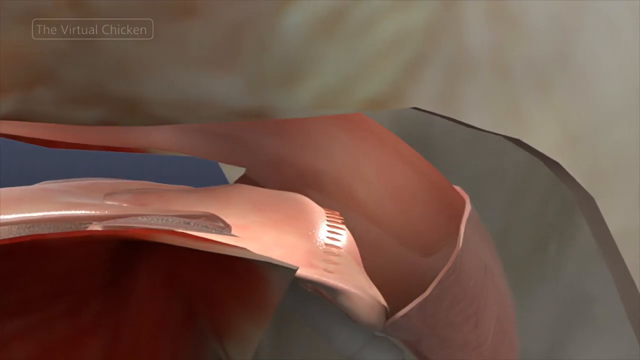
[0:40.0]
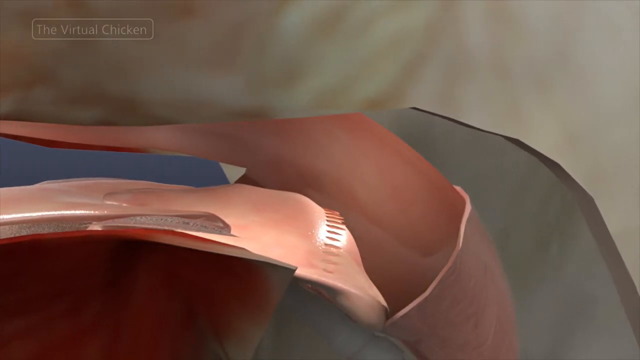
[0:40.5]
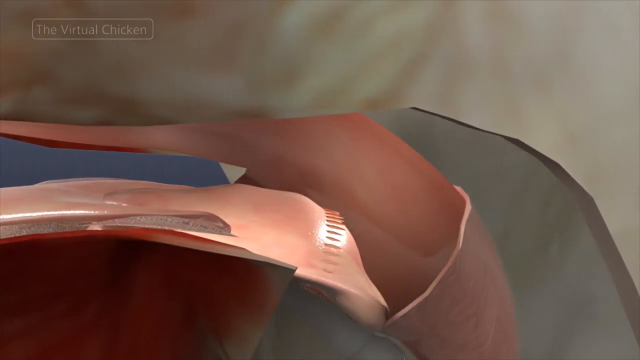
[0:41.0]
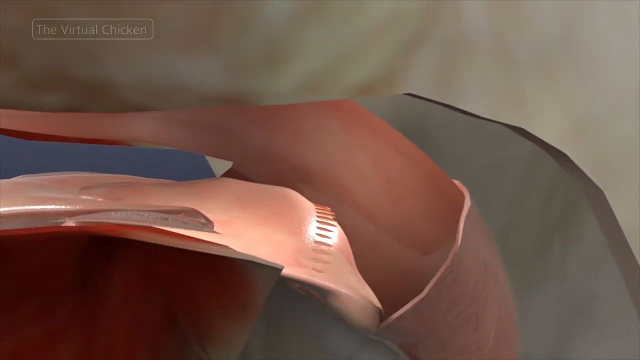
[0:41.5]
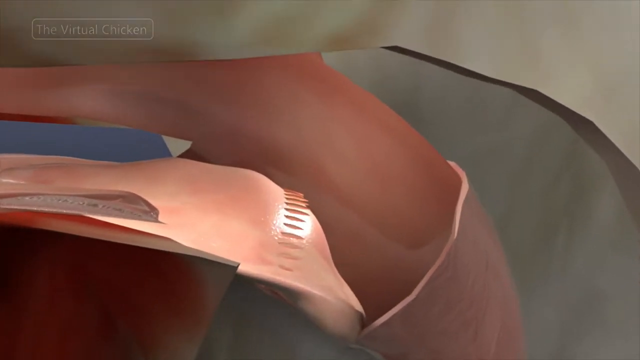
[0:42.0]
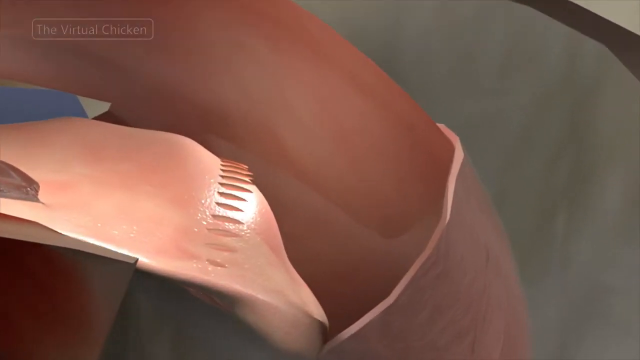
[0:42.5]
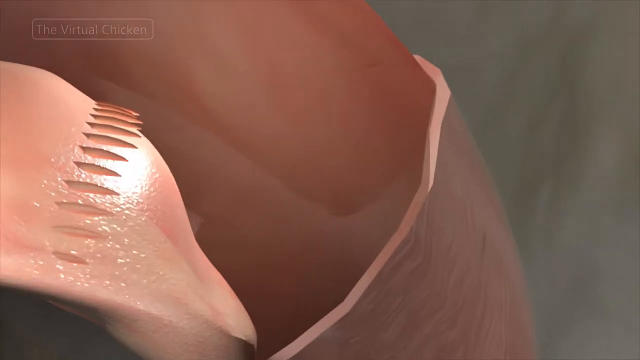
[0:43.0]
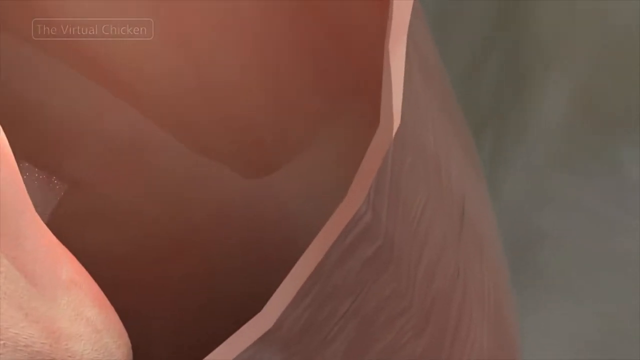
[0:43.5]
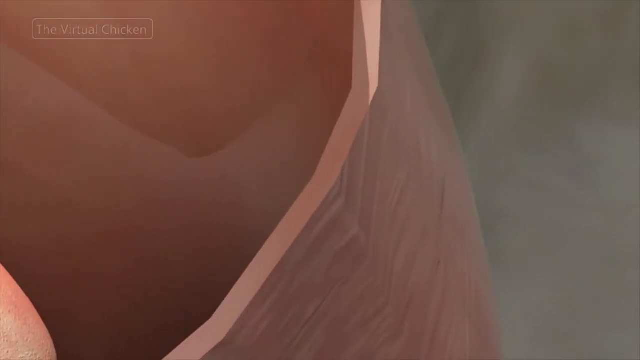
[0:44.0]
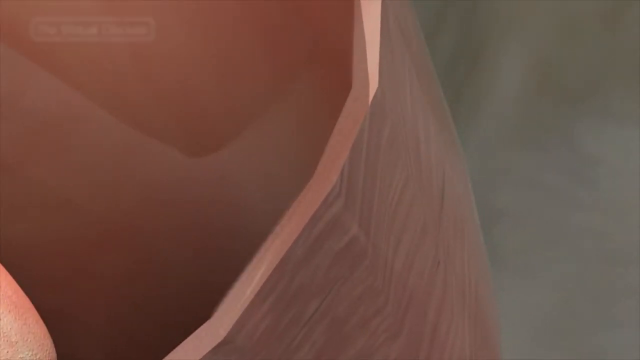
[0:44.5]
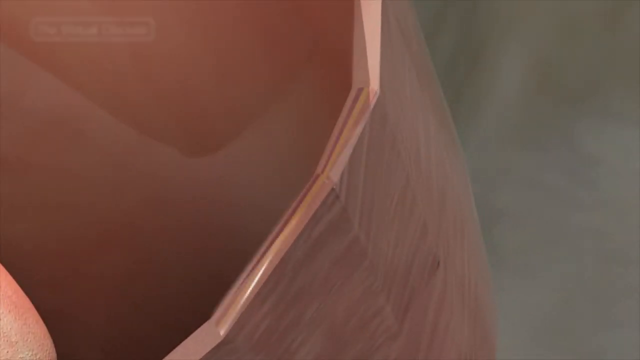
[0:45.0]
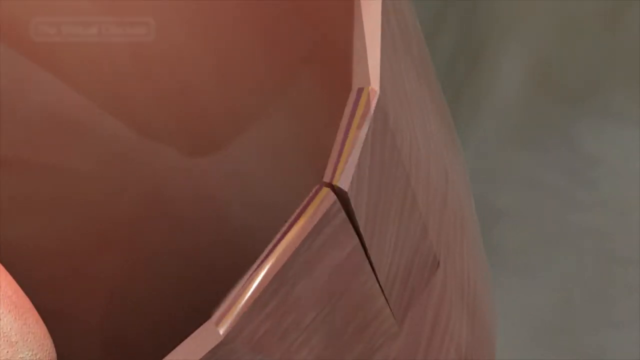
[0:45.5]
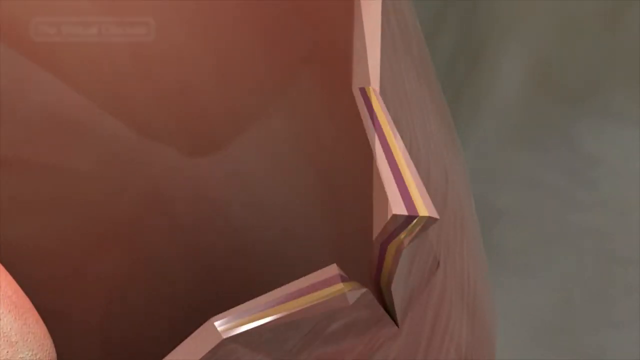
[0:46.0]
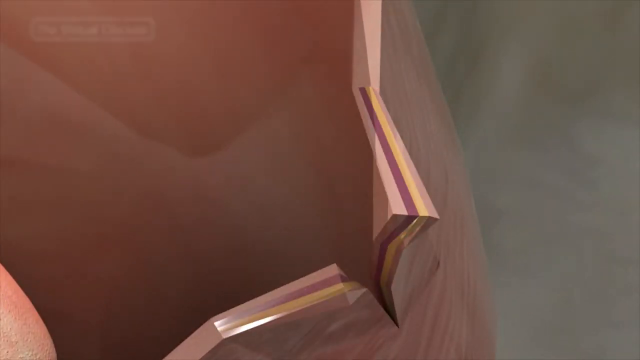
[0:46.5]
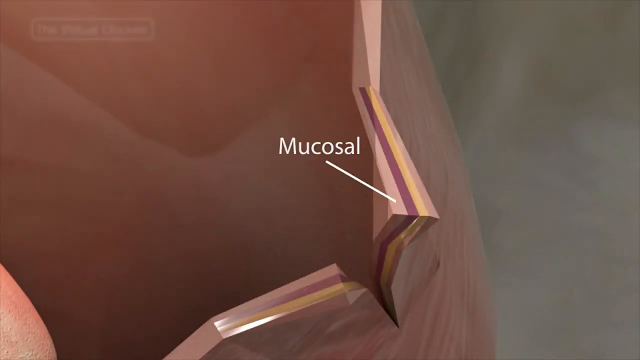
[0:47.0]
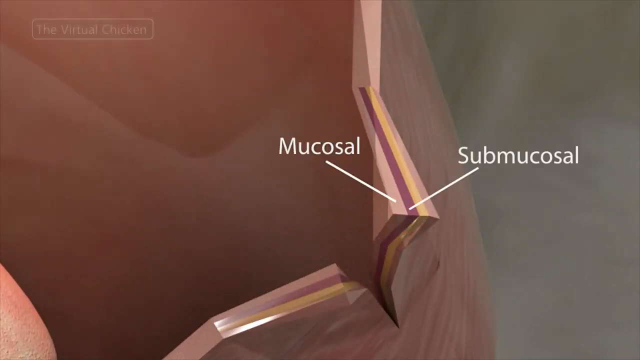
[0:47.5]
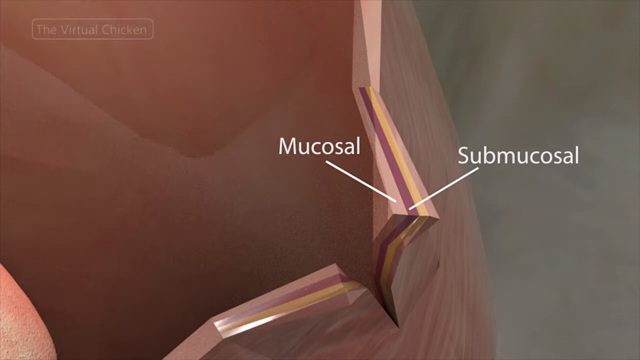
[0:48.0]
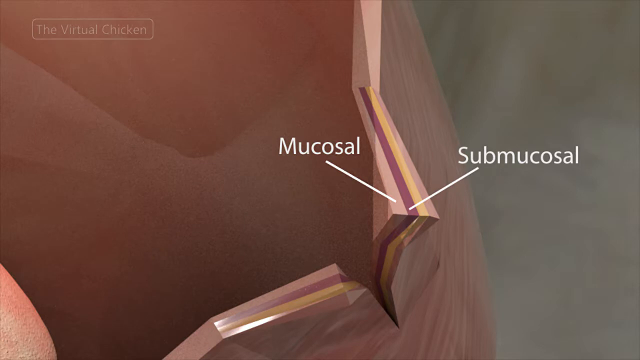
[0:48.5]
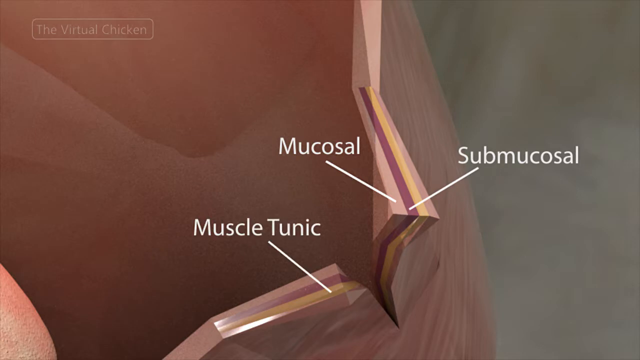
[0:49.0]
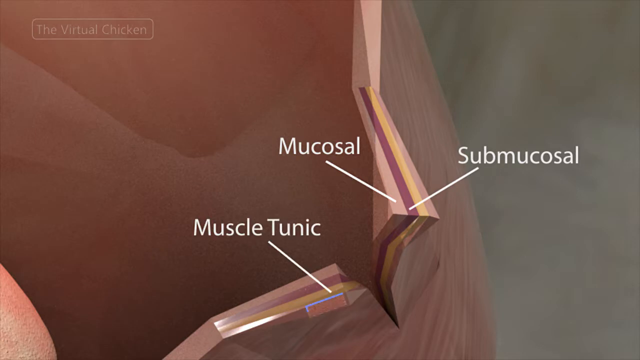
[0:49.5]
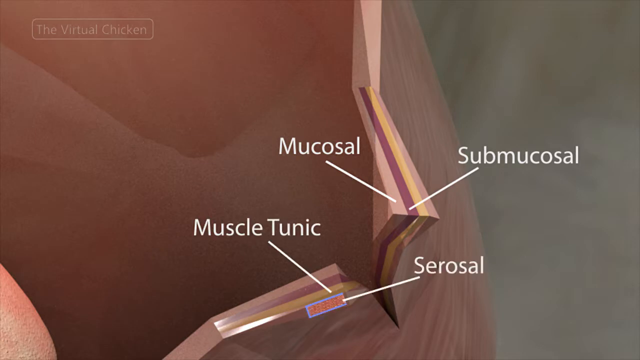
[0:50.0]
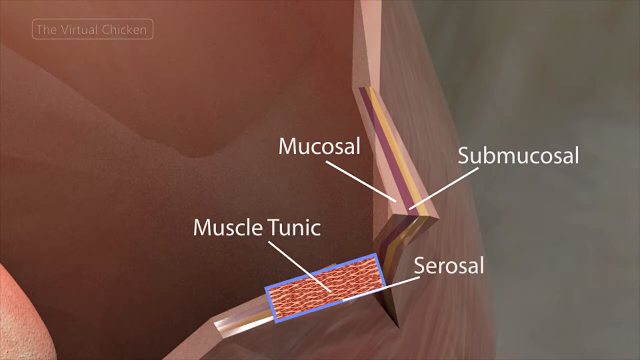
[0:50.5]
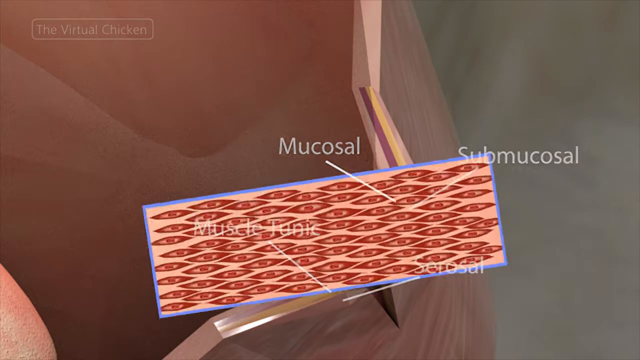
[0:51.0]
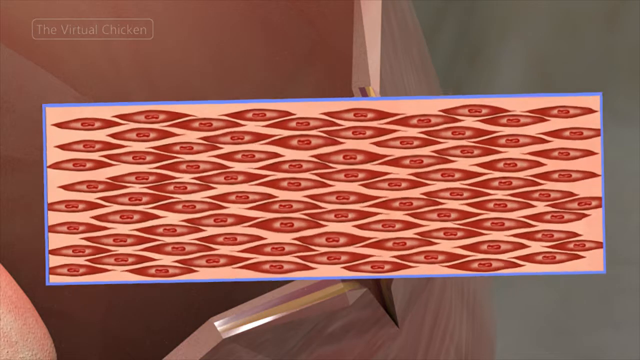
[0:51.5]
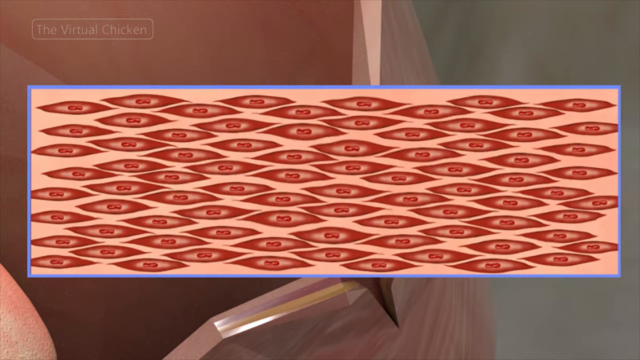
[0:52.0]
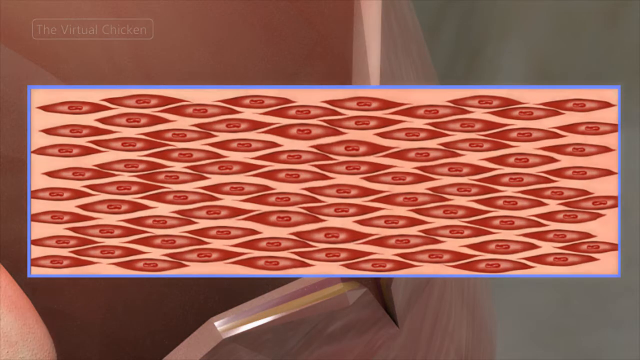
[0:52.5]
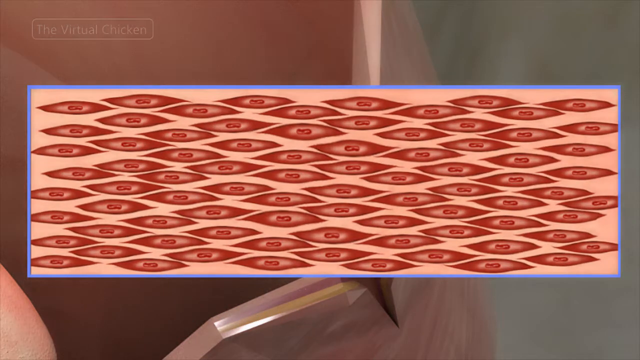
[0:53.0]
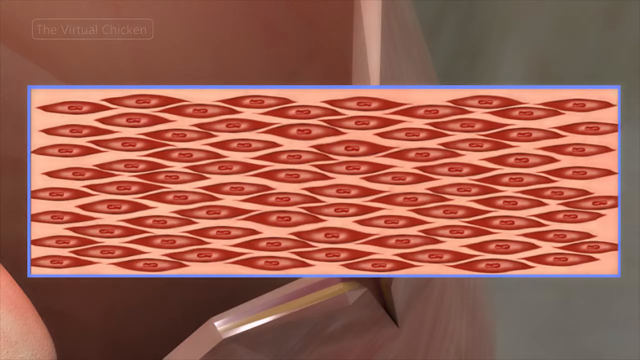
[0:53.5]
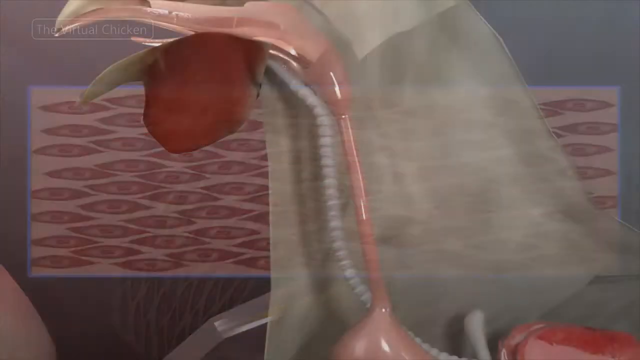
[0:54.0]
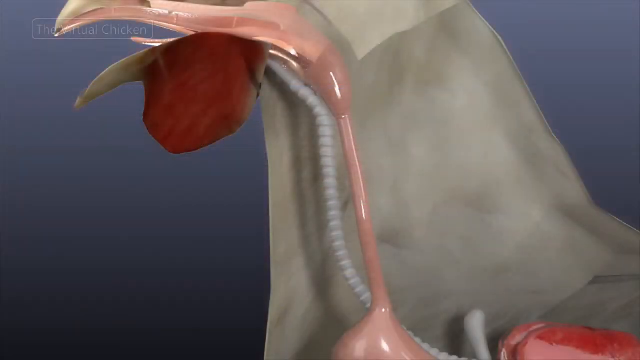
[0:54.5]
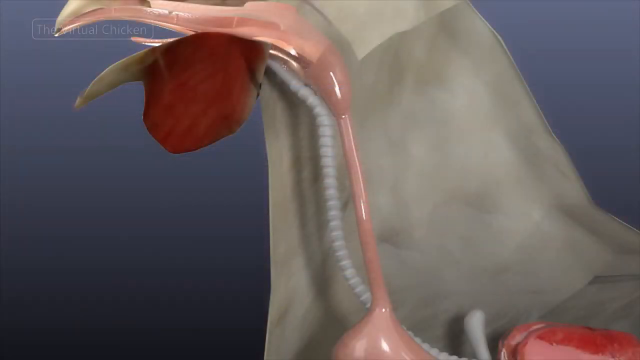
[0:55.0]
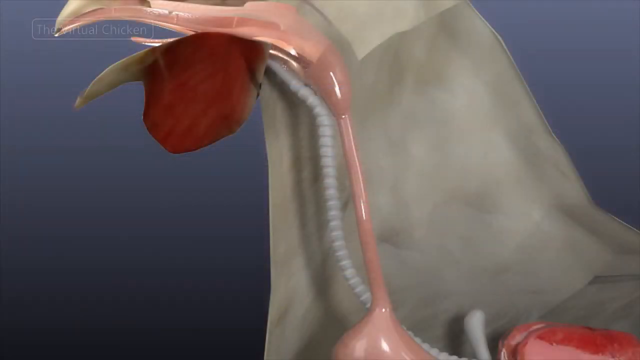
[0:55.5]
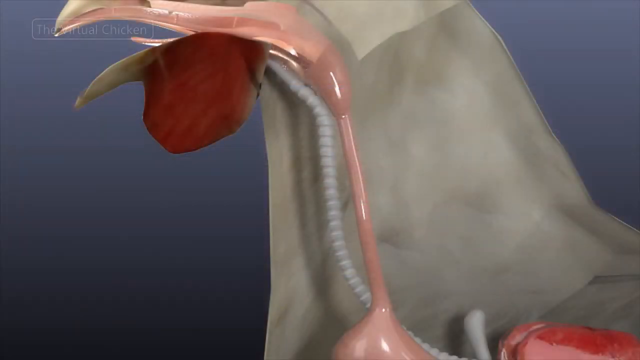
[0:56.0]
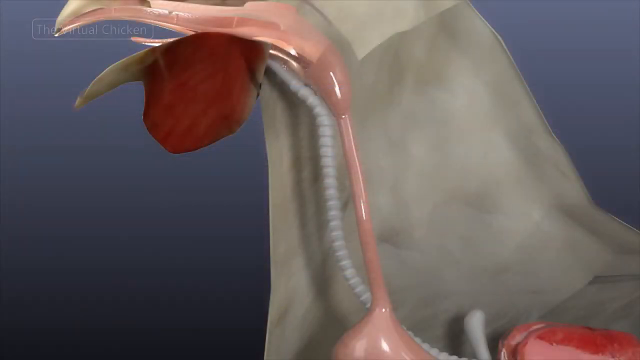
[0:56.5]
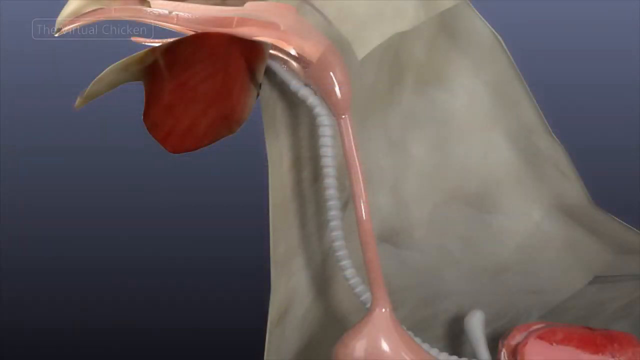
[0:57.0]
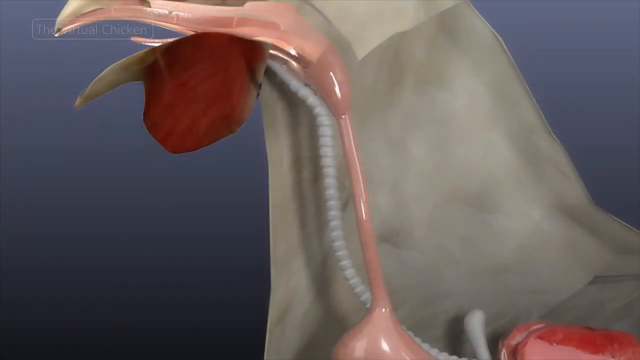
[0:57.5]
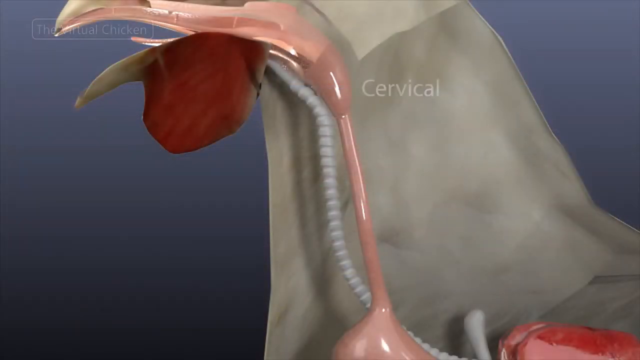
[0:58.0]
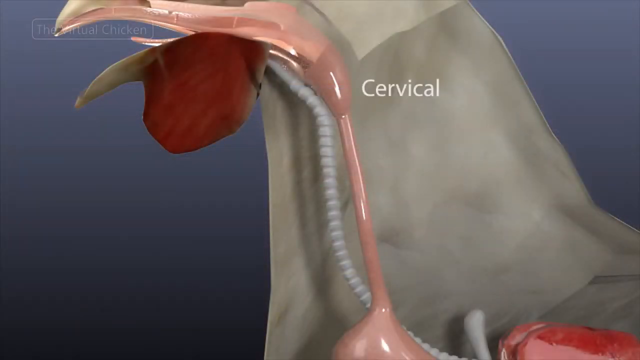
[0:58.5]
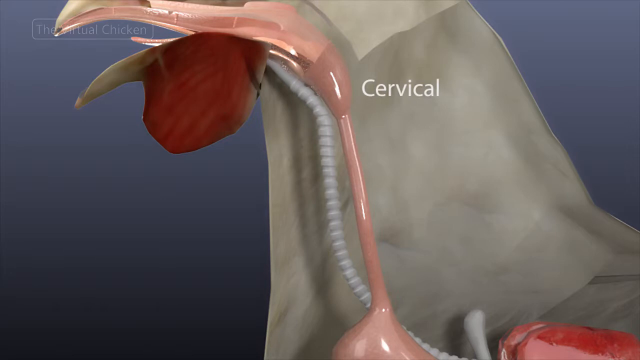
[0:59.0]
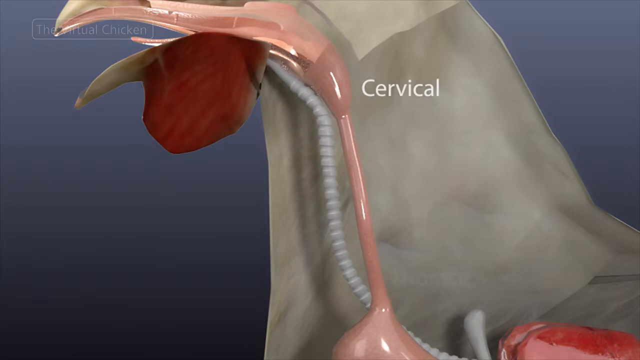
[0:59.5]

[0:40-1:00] The esophagus of the virtual chicken is shown, and the chicken's mouth looks red. The tongue pushes the food down through the neck, and the food goes down inside to the stomach. The chicken's head has two colors, red and white.